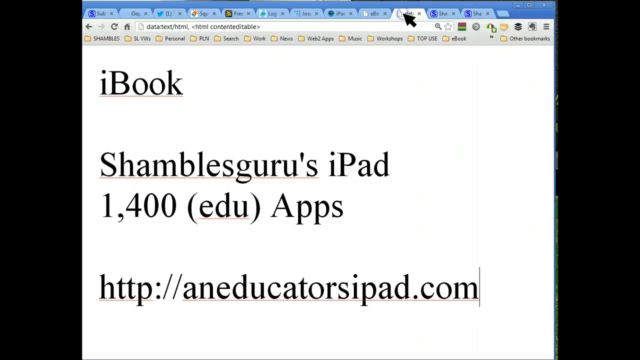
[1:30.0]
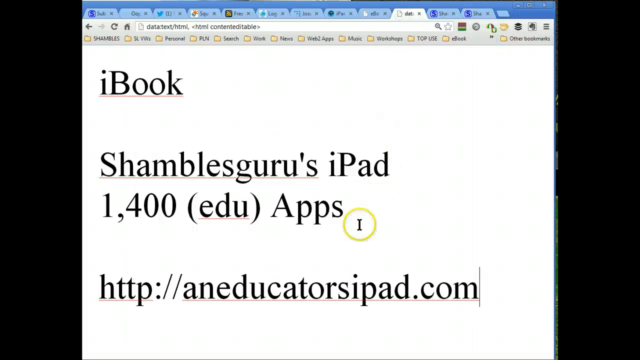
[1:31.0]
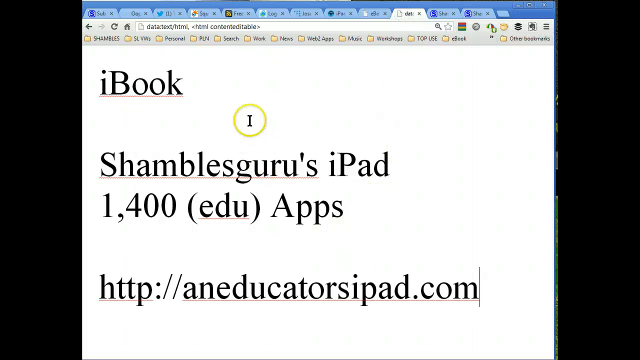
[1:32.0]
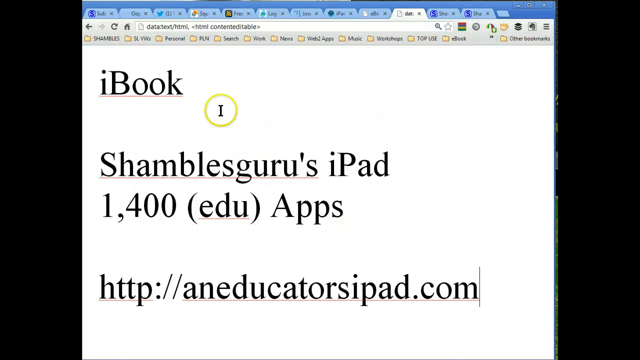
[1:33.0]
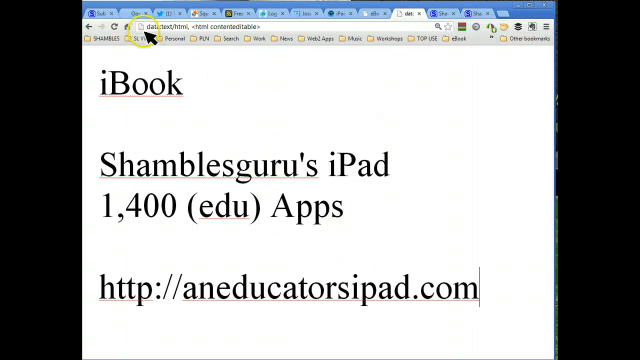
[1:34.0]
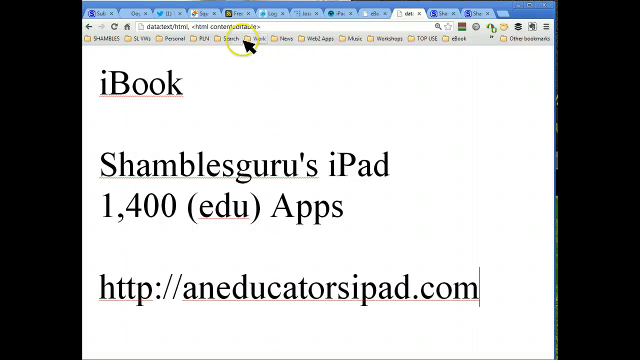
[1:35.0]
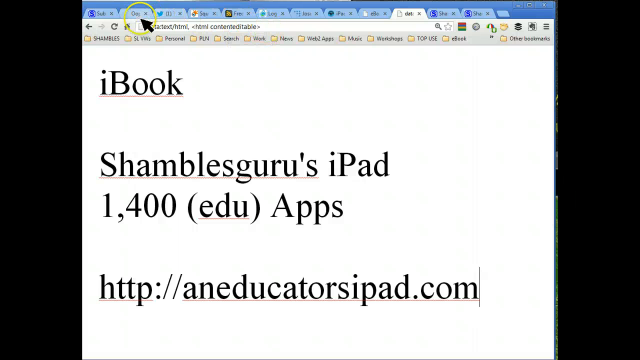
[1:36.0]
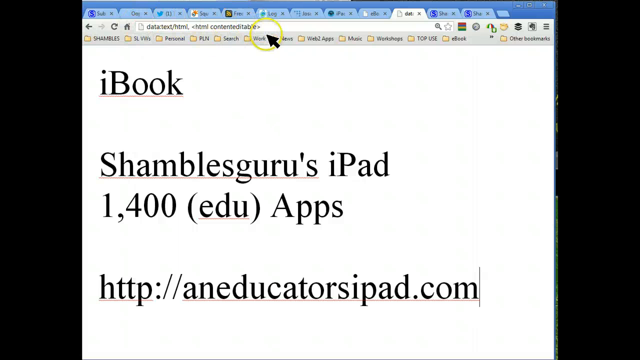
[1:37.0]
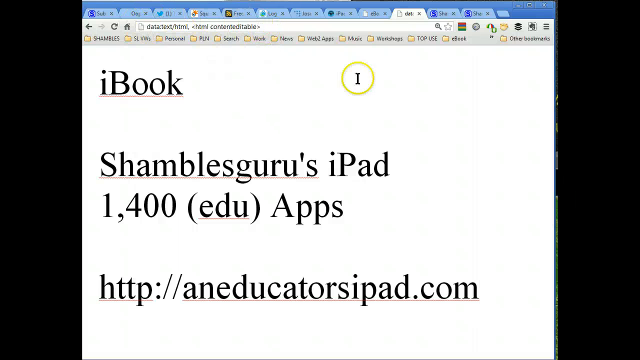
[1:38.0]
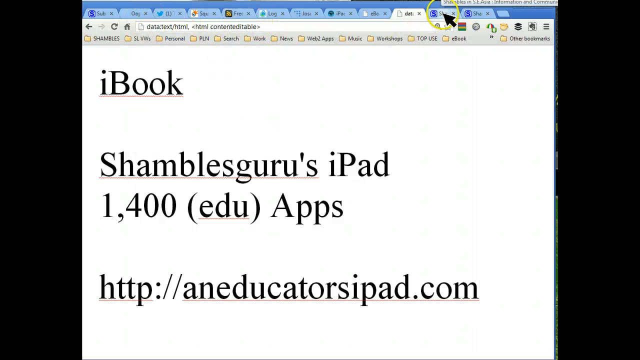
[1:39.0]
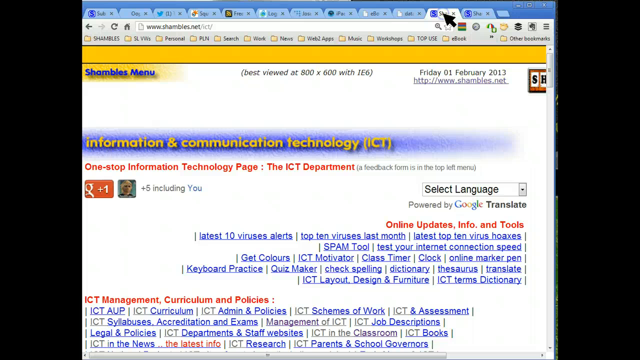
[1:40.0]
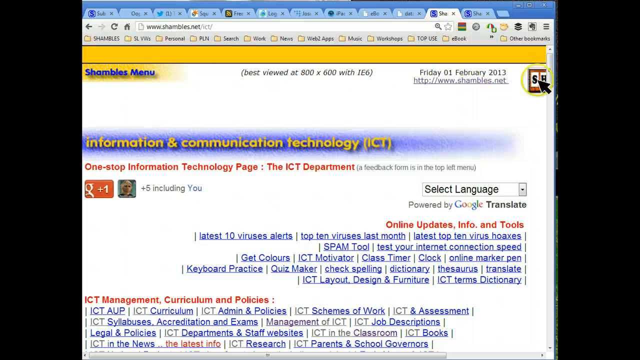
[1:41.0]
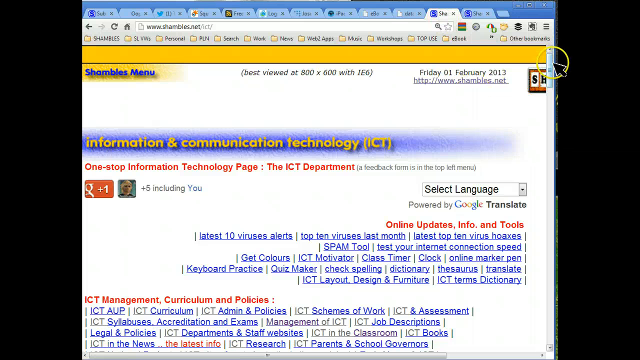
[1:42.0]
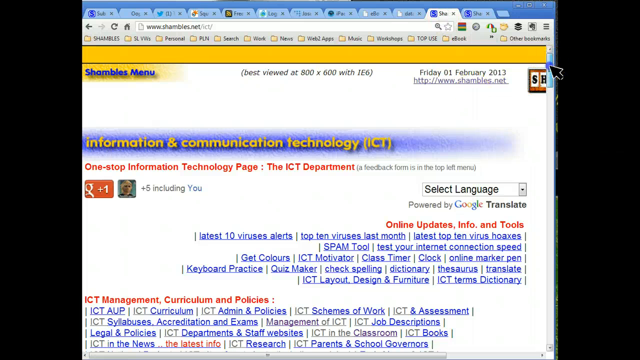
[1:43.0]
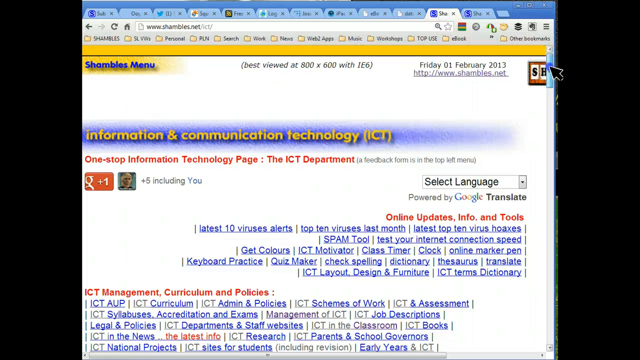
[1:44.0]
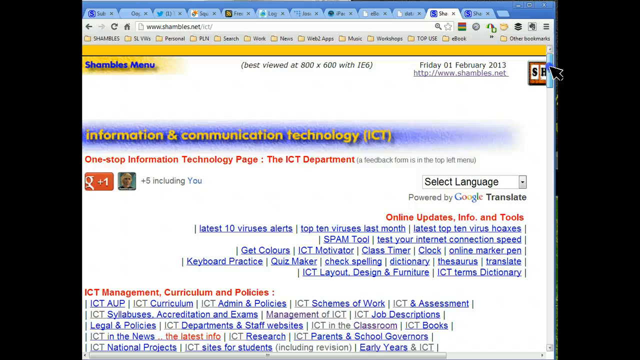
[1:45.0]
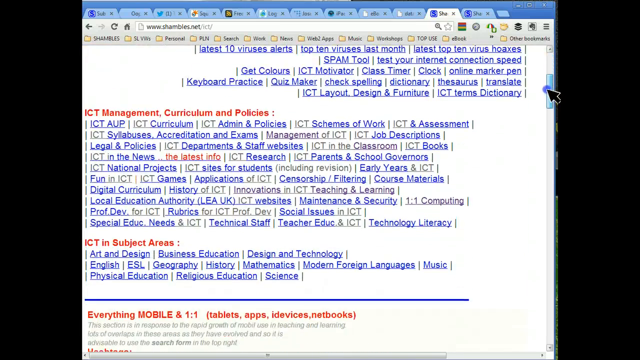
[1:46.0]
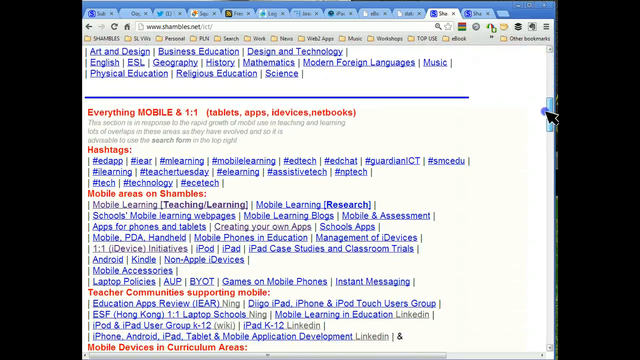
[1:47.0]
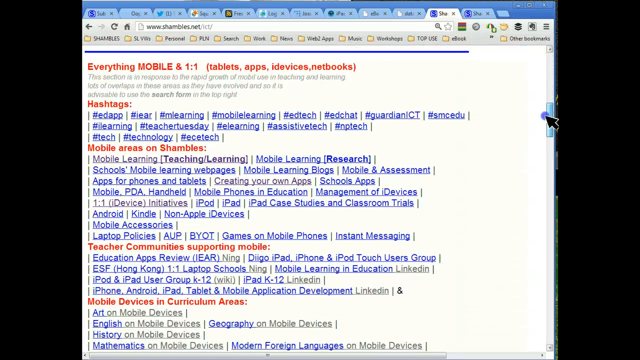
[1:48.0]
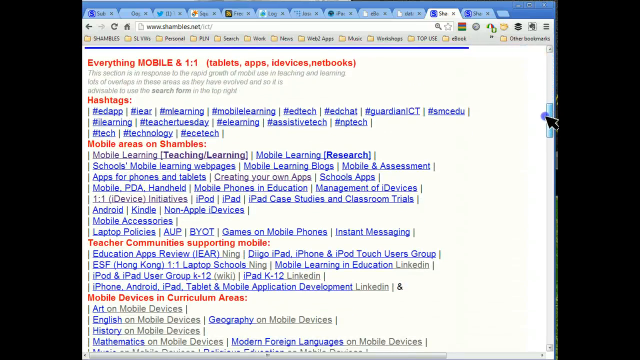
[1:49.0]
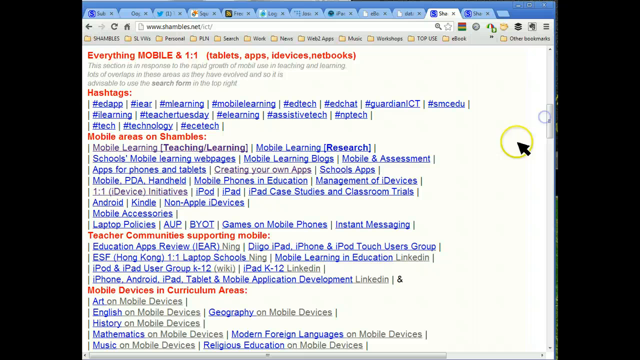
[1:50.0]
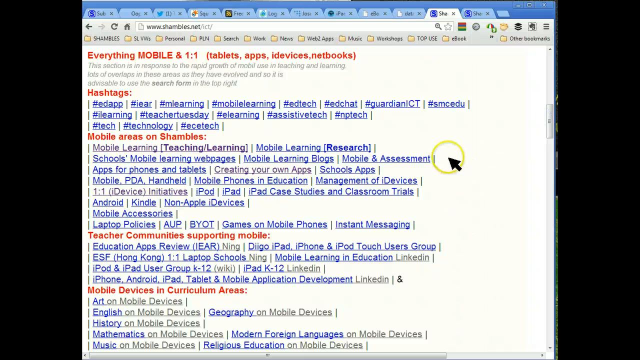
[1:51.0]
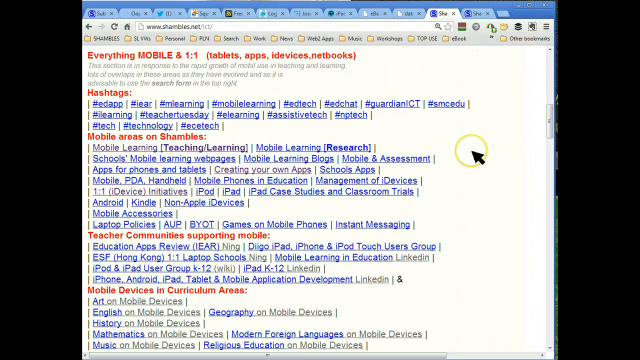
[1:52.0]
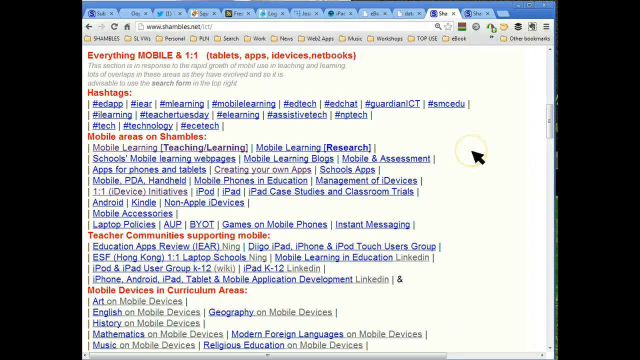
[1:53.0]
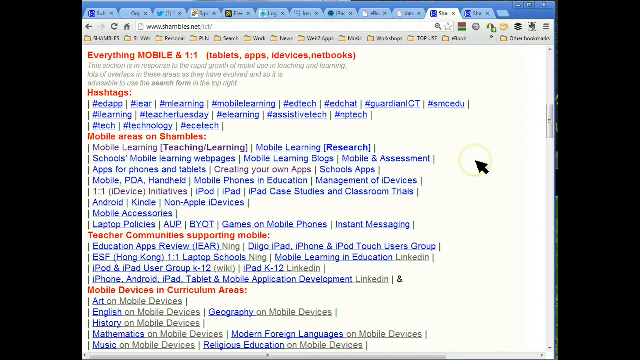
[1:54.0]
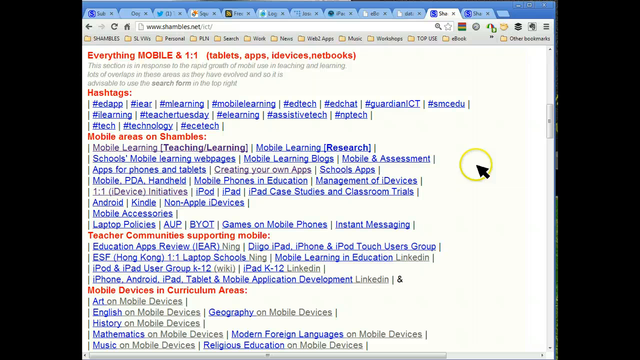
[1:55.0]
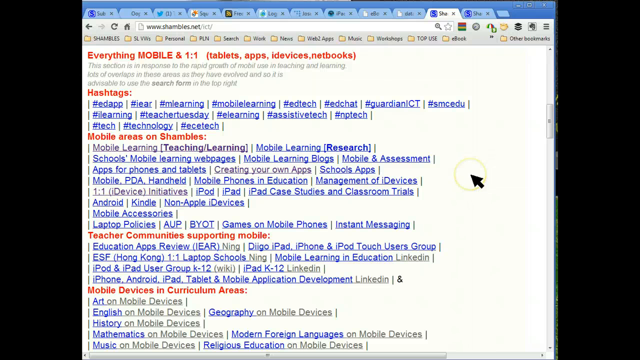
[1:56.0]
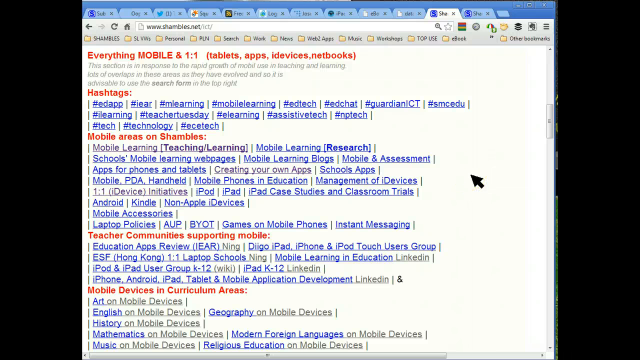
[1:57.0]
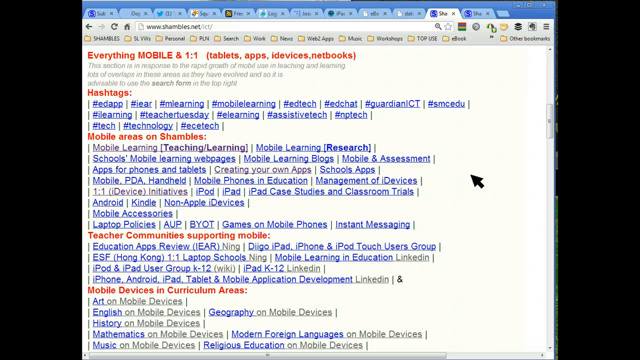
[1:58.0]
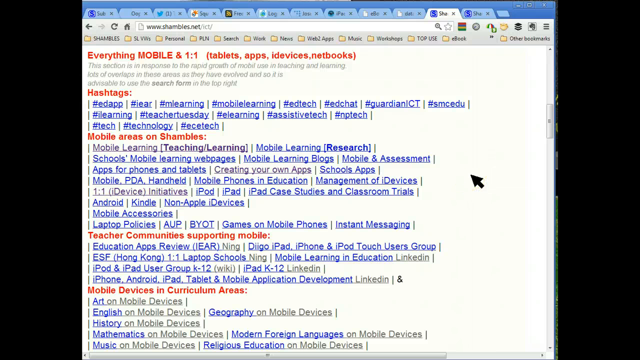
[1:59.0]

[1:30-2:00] A boy sits on a white chair with black handles in the middle of very green, neatly trimmed grass. He has short blonde hair that falls into his face. There is writing on the back of the chair. The camera rotates so that the boy is seen from all different angles. Behind him a screen shows the Facebook logo, and there is an Apple screen with smoke coming out. The boy opens his mouth as if saying something. The video then goes to a page reading "twist", where the mouse moves around looking for a website and then finds a folder for an iPad. The screens around where he sits are apparently iPads, and it seems someone wants to buy the iPad from the website.